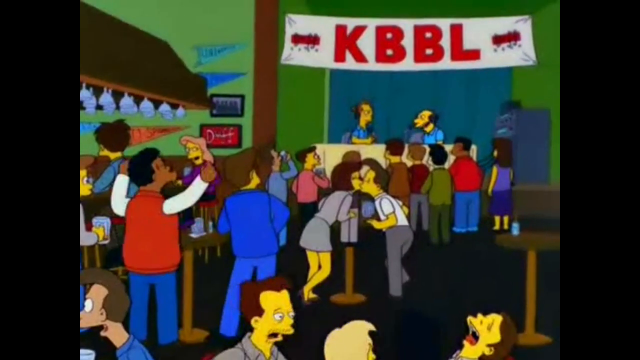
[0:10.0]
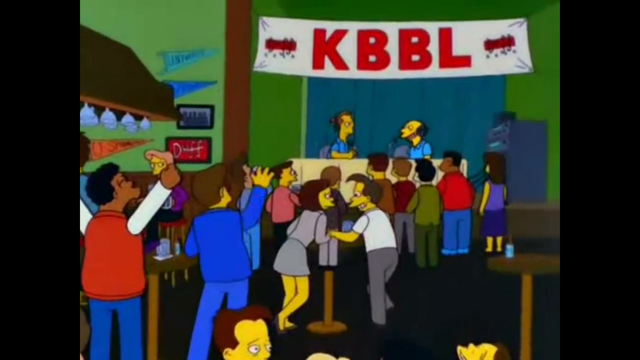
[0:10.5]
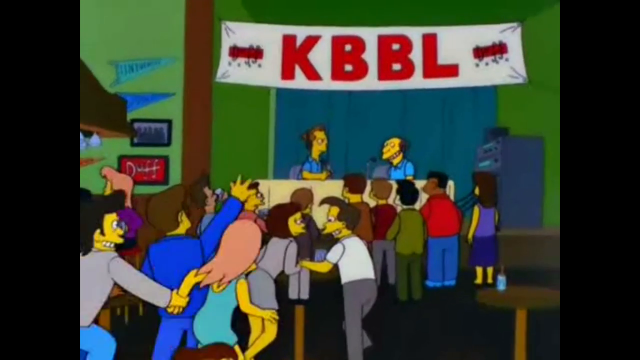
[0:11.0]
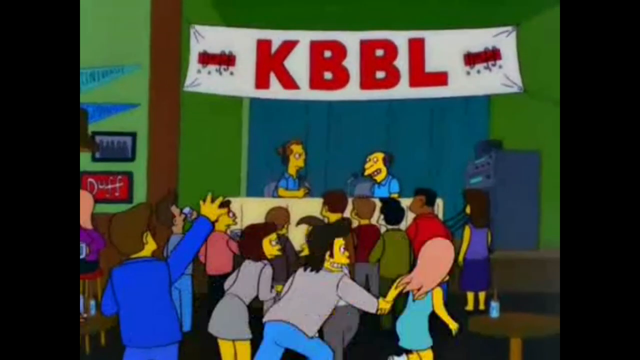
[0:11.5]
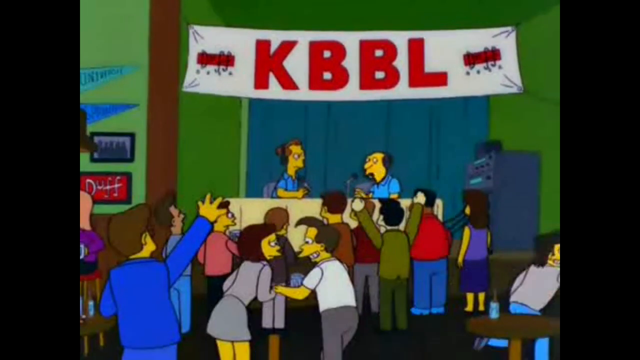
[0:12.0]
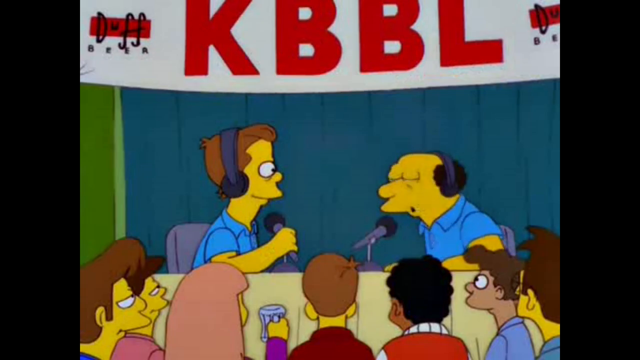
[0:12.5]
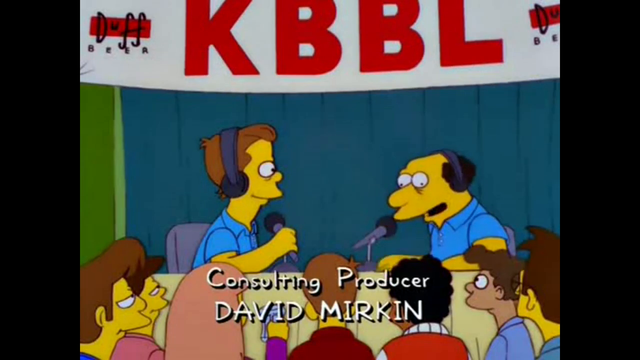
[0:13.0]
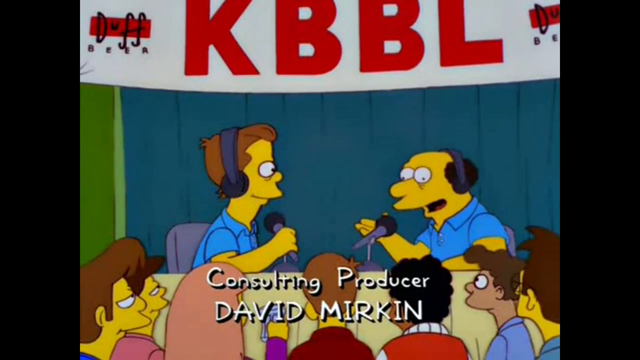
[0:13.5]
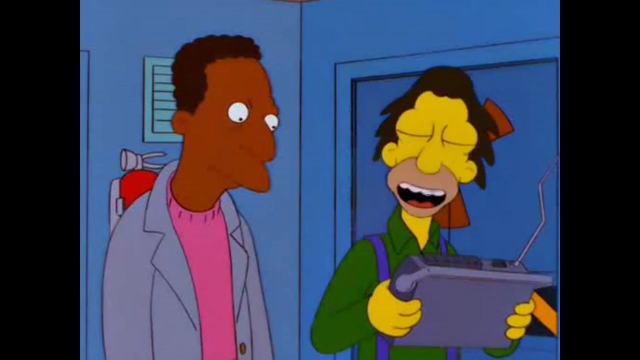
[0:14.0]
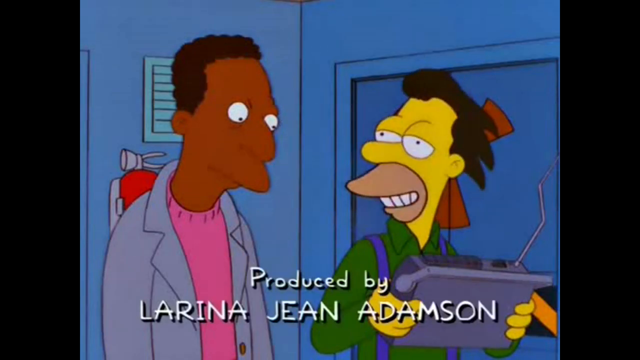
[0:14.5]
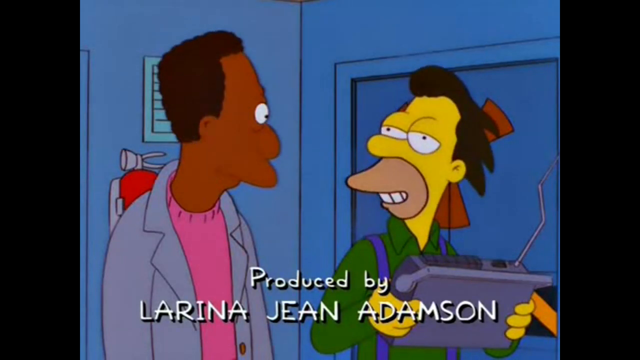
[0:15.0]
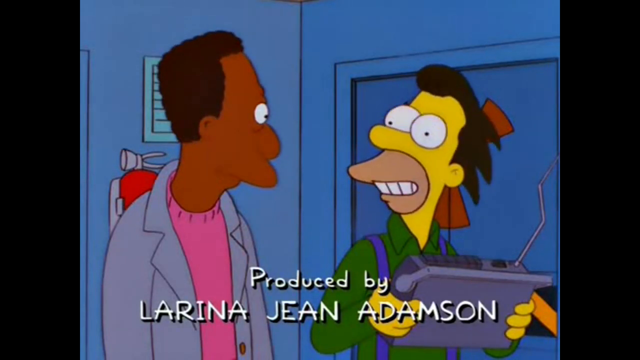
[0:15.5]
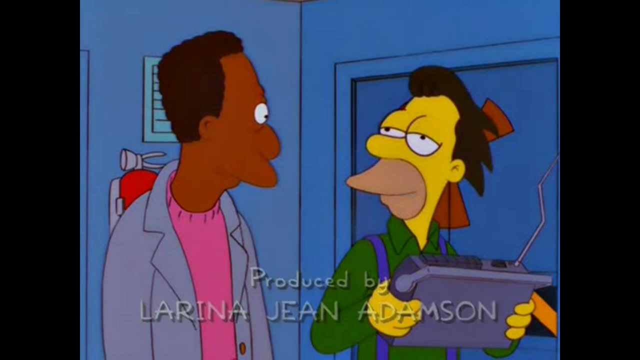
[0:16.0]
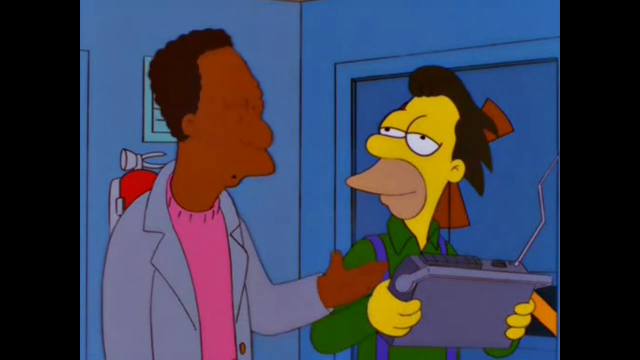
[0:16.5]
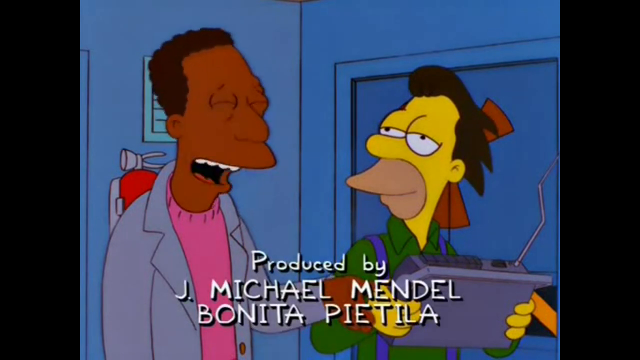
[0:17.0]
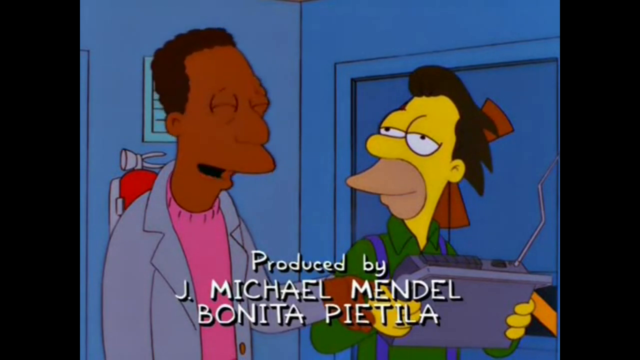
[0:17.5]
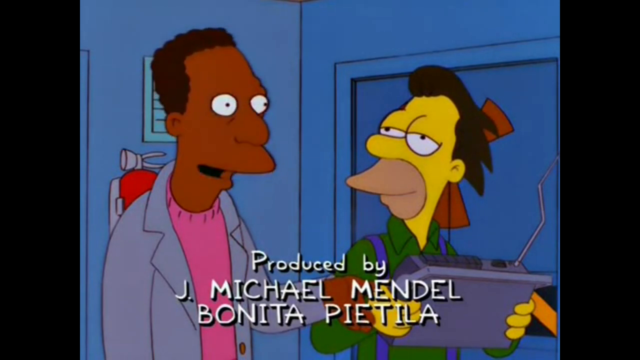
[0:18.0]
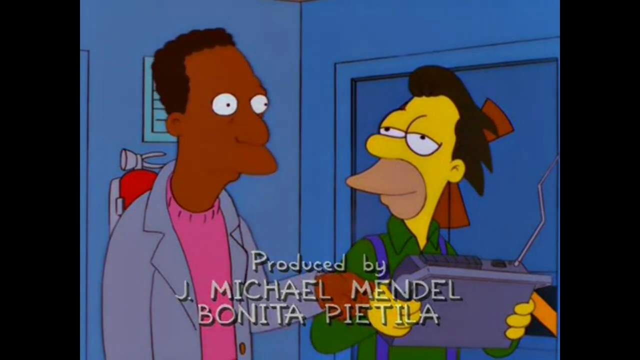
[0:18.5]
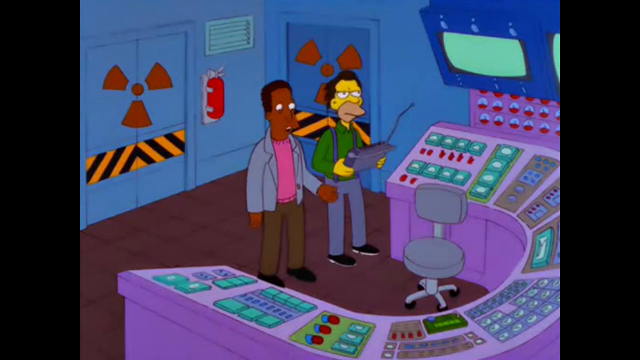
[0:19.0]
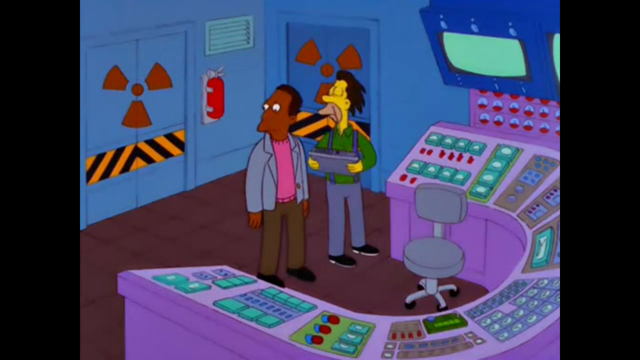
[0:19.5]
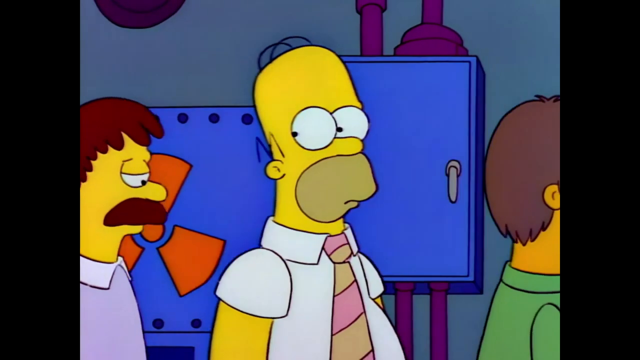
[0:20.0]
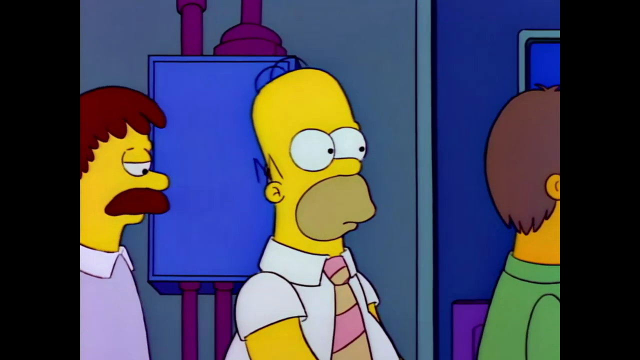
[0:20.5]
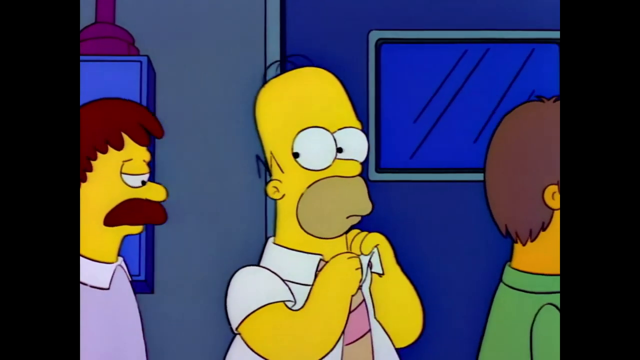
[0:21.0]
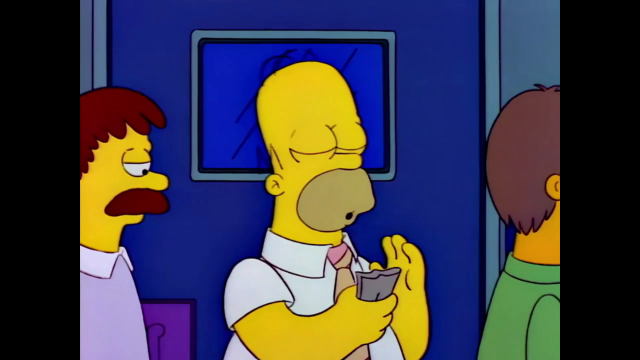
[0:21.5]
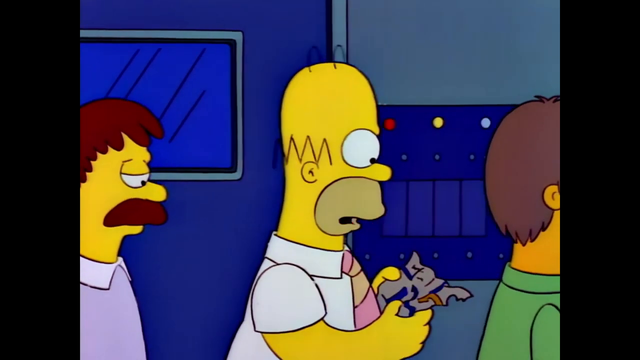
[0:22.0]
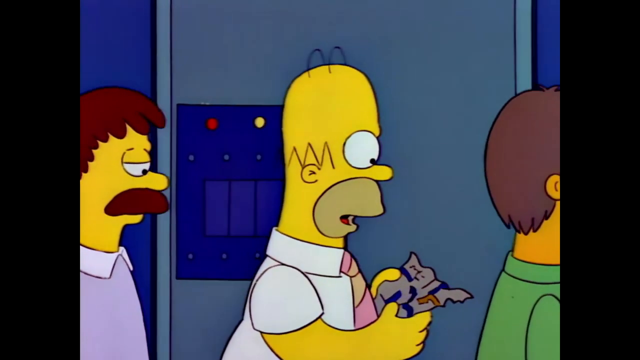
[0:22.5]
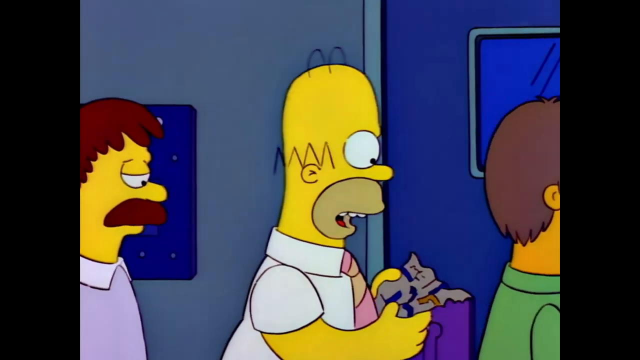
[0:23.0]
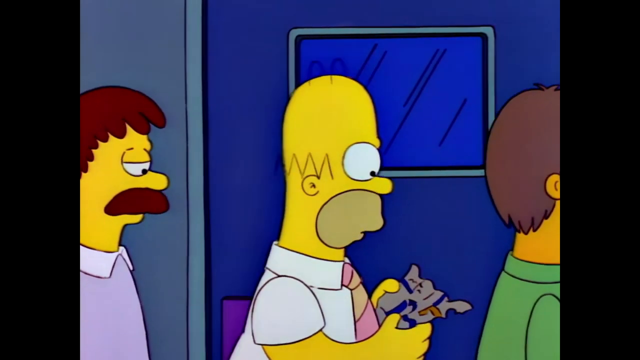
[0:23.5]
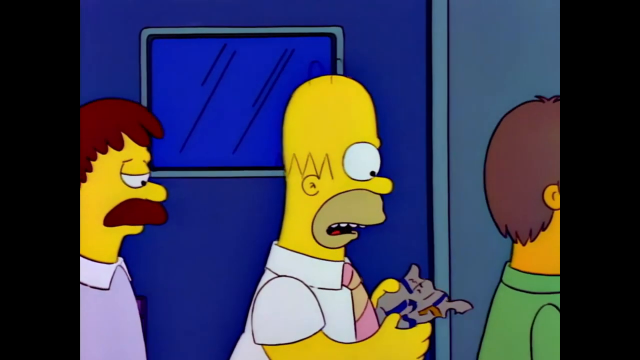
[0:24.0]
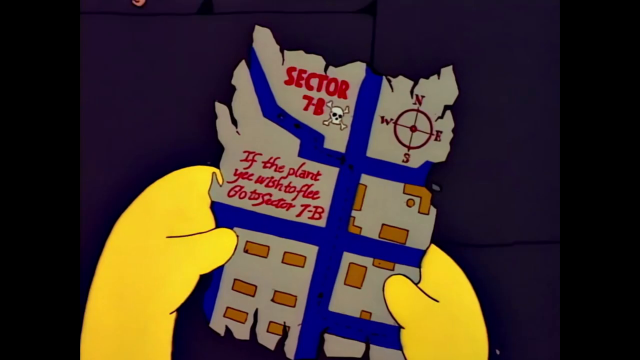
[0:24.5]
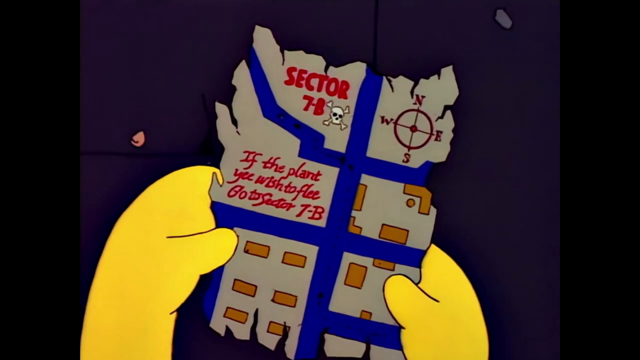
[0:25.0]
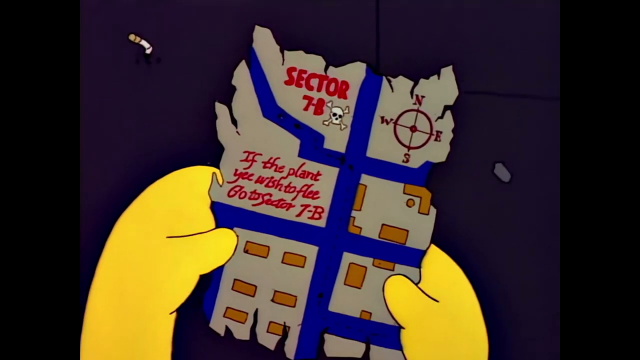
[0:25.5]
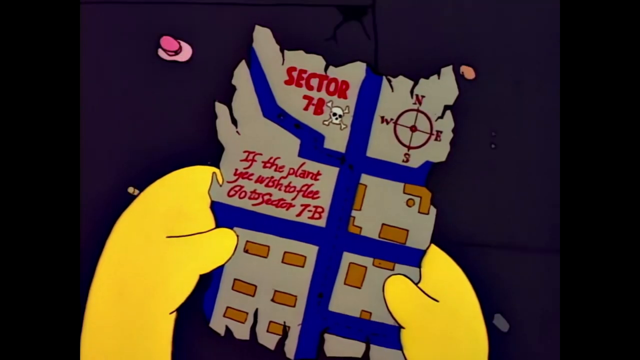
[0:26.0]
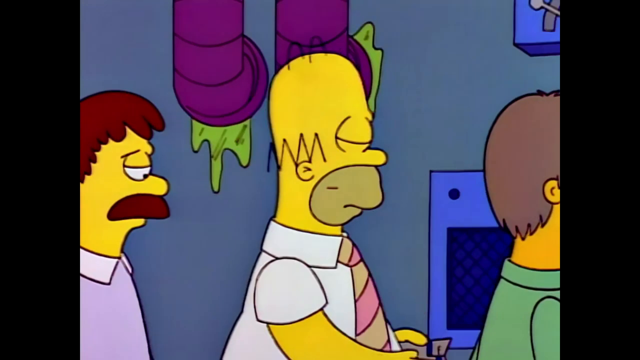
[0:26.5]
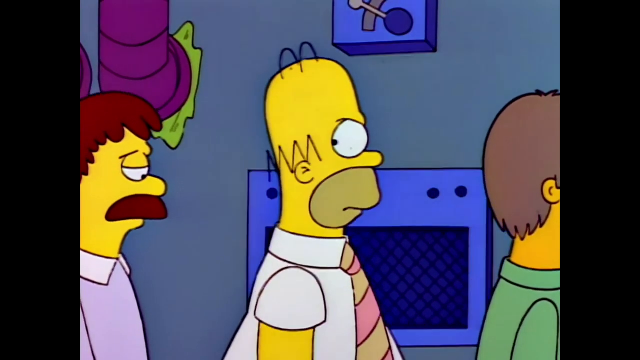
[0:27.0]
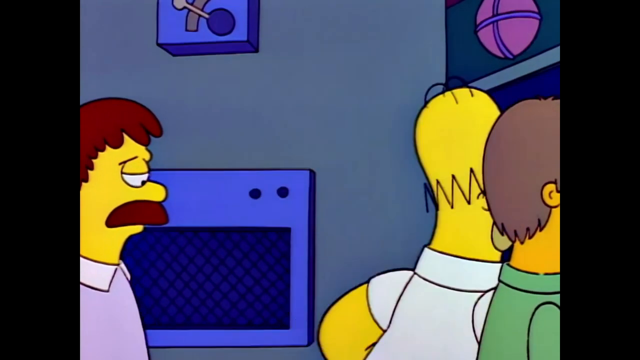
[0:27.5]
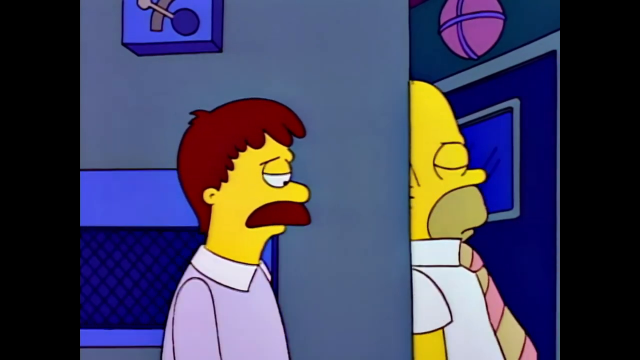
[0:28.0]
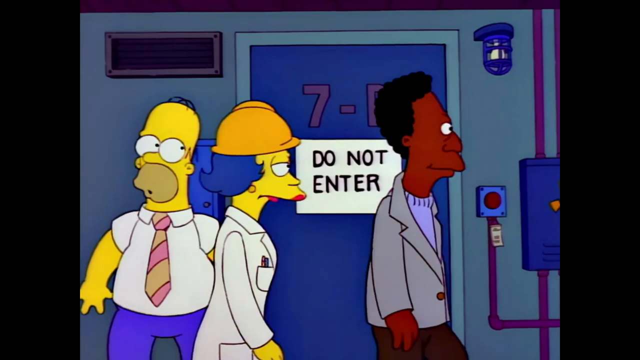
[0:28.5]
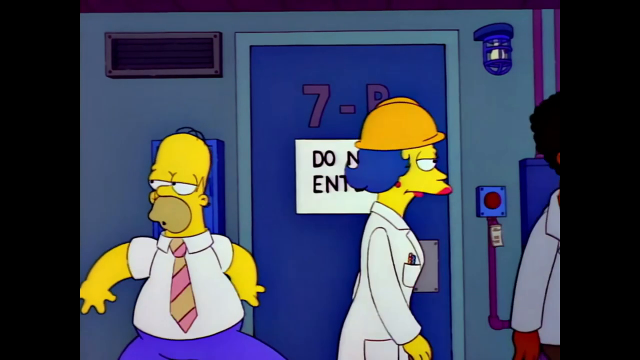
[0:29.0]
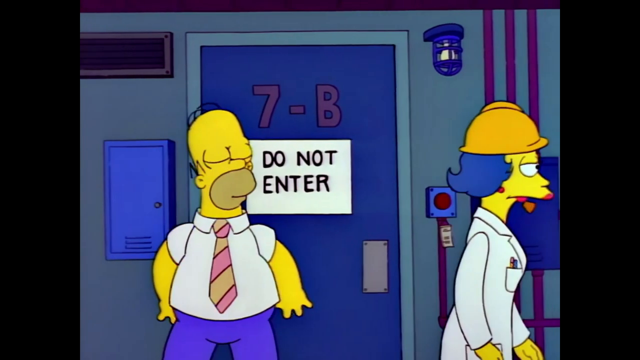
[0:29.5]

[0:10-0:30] People are at the bar, some standing in front of a podium on the left side. Two people with headsets sit behind a table, and above them is a red banner that says "KBBL" in bold red lettering. On the left side is the bar, with some glasses hanging from it. In the center a couple is kissing while some people watch and others wave their hands around as the two people talk. A boy and a girl come running from the bottom left and off the right side. The shot cuts to a close-up showing the tops of the heads of about seven people across the bottom. On the left, a man with brown hair, a headset and a blue shirt holds a microphone in his right hand, facing right. The other man, bald on top and wearing earphones, talks into a microphone on the table in front of him, down to the left. The scene cuts to Lenny and Moe, Lenny on the left and Moe on the right, while text across the bottom shows who the show is produced by. With a radio in his hand, he turns and starts talking to Lenny, who talks back and gestures with his hand. Homer is gone. Then Homer is in the center, with a man in front of him to the right and a man behind him to the left, facing right as he walks past the blue control panel. He looks around nervously, reaches into his shirt and pulls out a piece of paper, looking down at it in front of him while talking and still walking, with doors passing by. It is a map of Sector 7B, with blue lines for the hallway, a compass showing northwest, east and south in the top right, and crossbones by the name. His hands are visible, and there is debris on the floor. He ducks behind a corner and comes up to a door that says "Do Not Enter", labeled "7B".